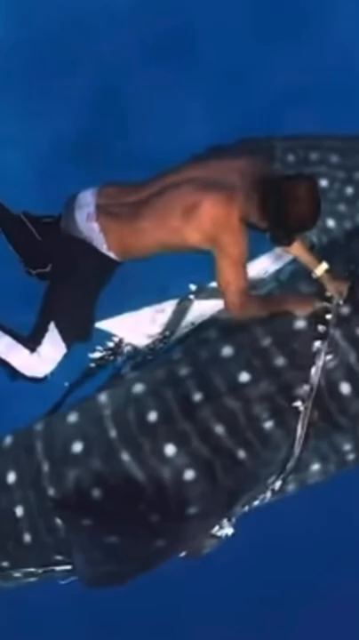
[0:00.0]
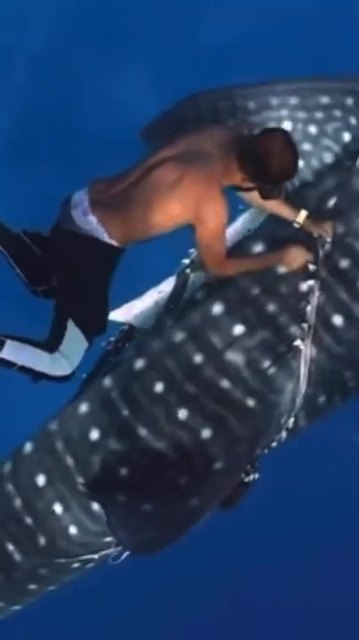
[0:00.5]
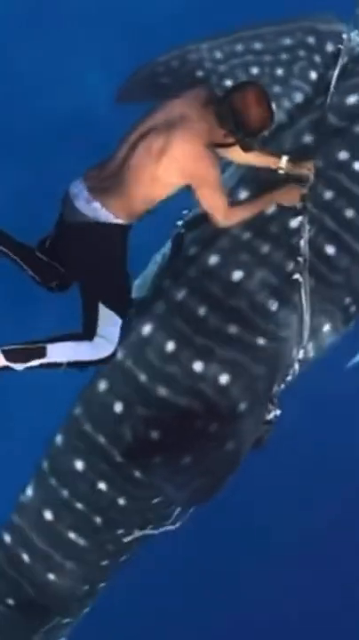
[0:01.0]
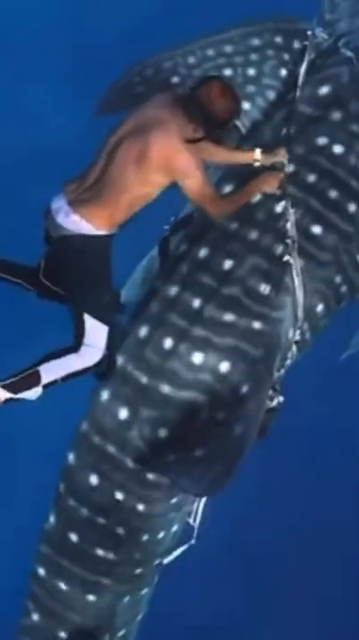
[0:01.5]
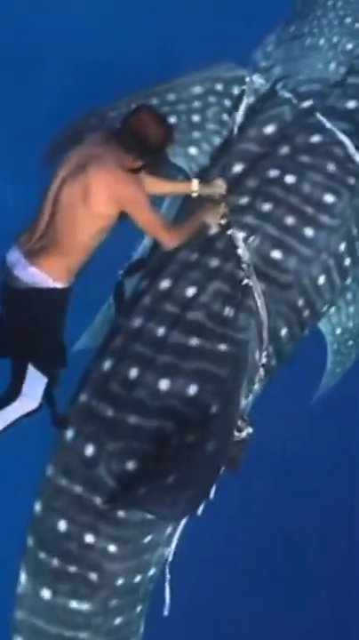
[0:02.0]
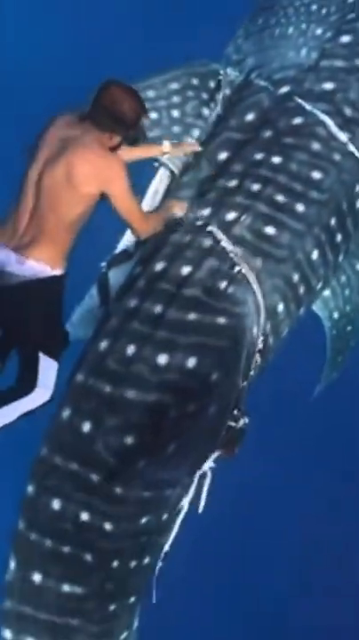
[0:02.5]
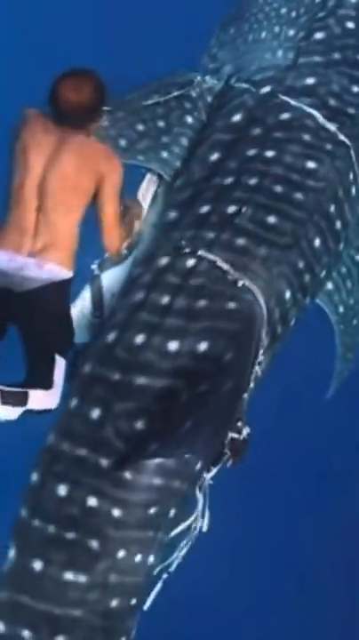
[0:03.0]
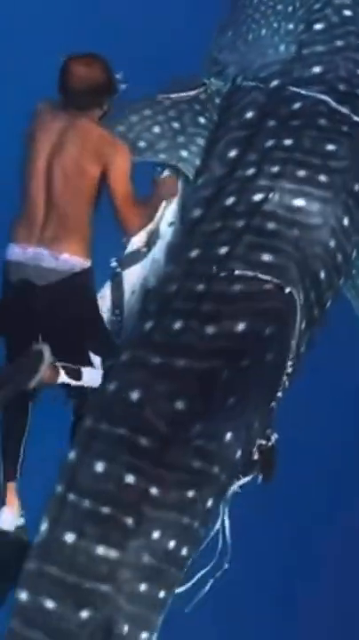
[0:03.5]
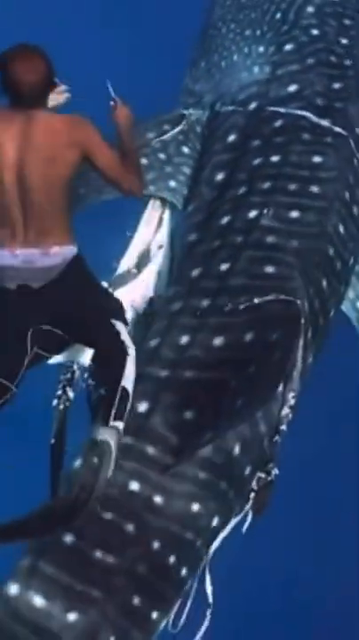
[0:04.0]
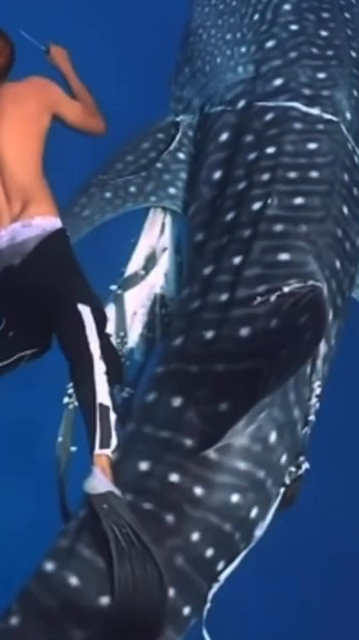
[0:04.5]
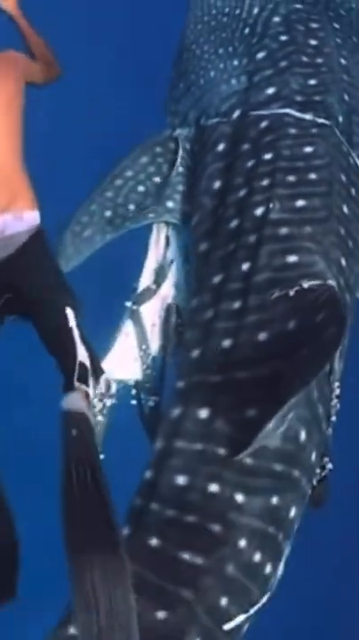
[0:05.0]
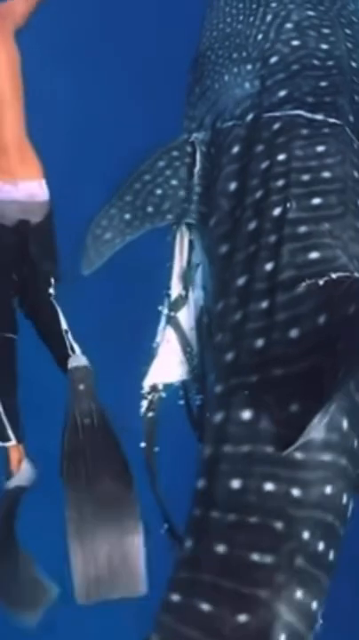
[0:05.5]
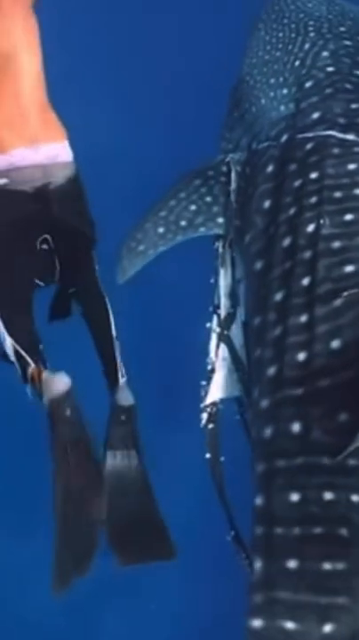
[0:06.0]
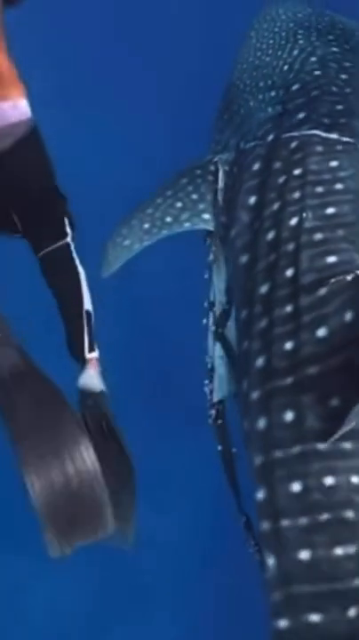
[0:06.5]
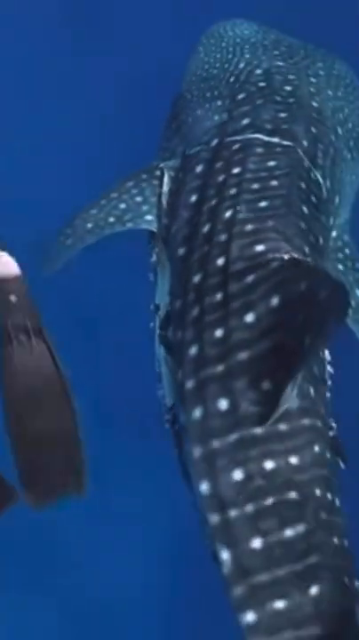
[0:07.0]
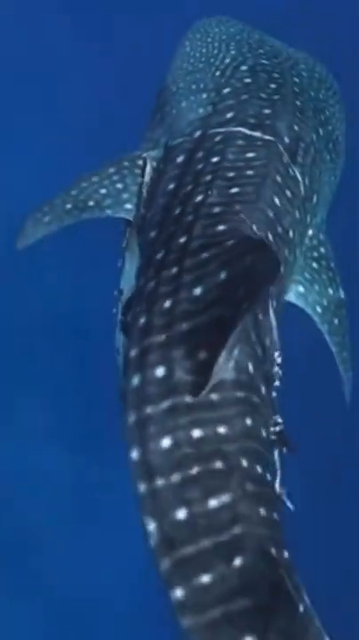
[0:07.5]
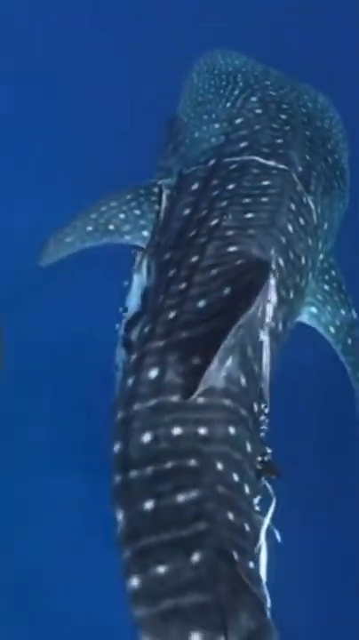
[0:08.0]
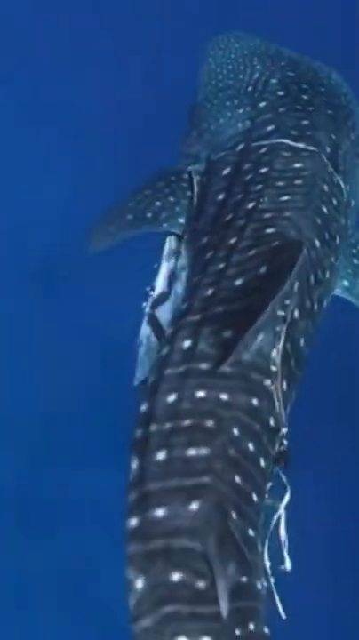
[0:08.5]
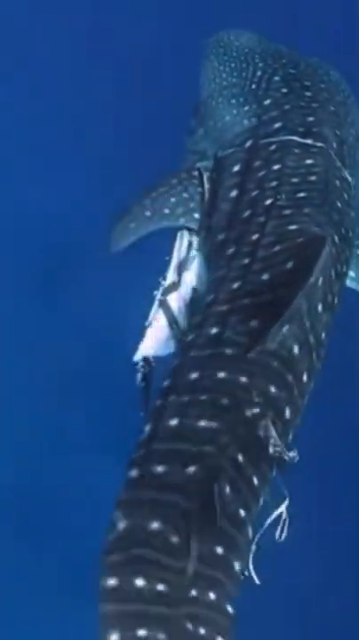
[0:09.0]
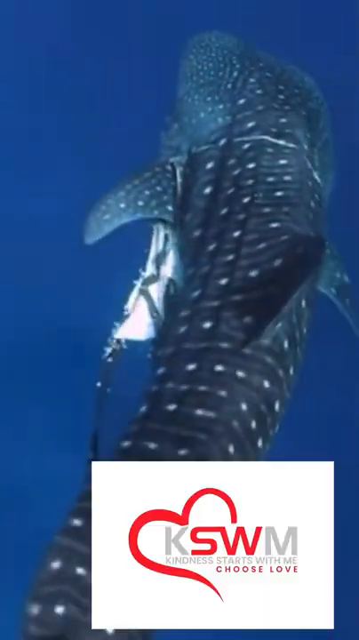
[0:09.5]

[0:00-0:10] The video short, titled Kind and Brave Man Shorts, opens underwater, where a shirtless man is cutting off netting around a gigantic whale. He has no breathing apparatus and wears flippers. He cuts off a cord or a strap to a net, and then appears to be heading back up to the surface for air. The whale, maybe a blue whale, is very long, probably four times the size of the man. At the end of the video, "KSWM" appears with a heart.